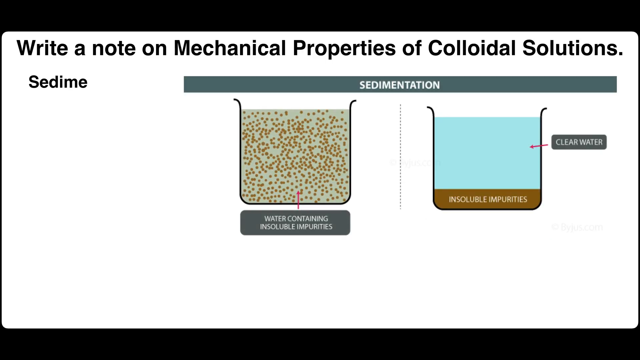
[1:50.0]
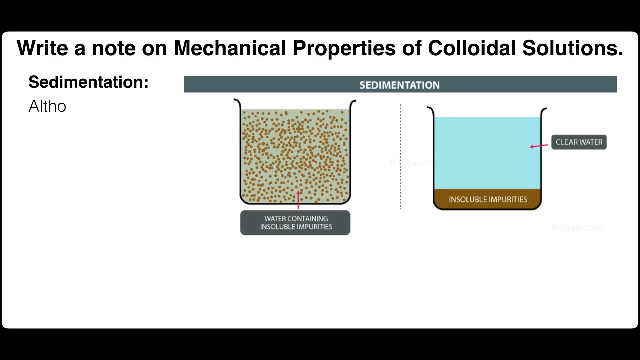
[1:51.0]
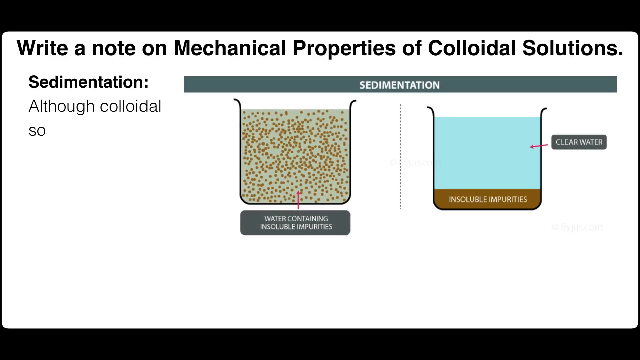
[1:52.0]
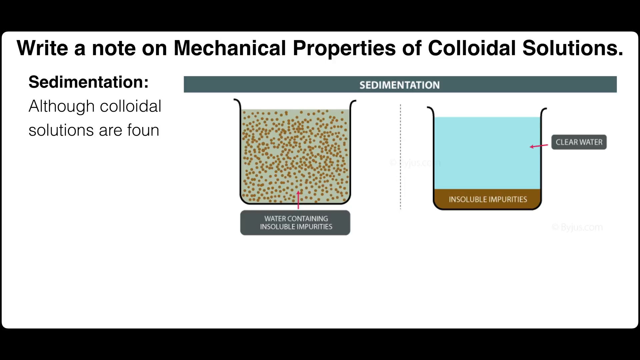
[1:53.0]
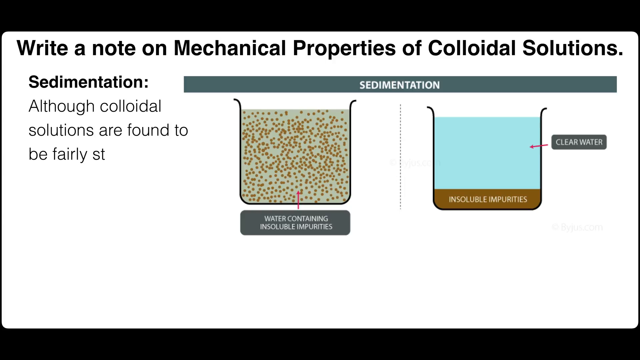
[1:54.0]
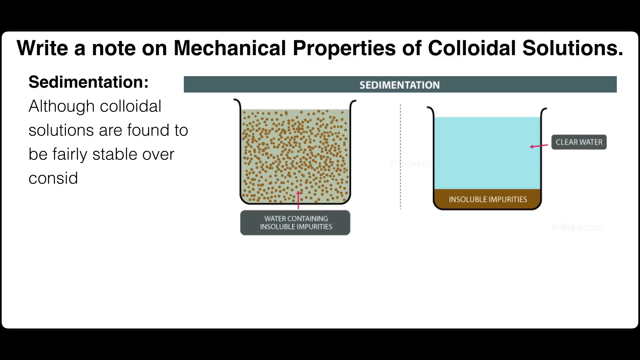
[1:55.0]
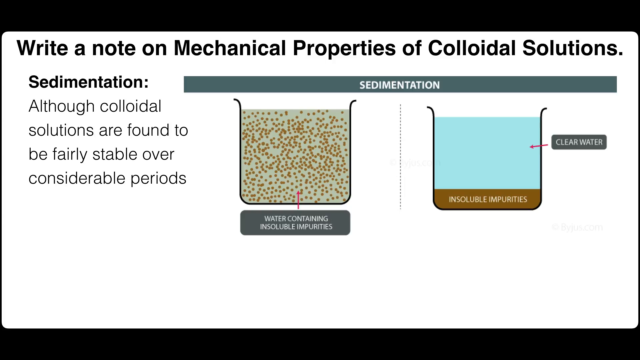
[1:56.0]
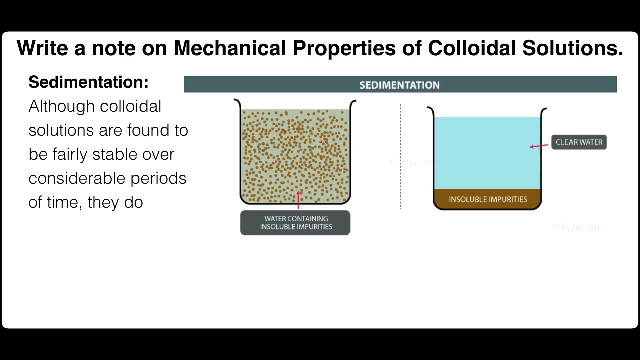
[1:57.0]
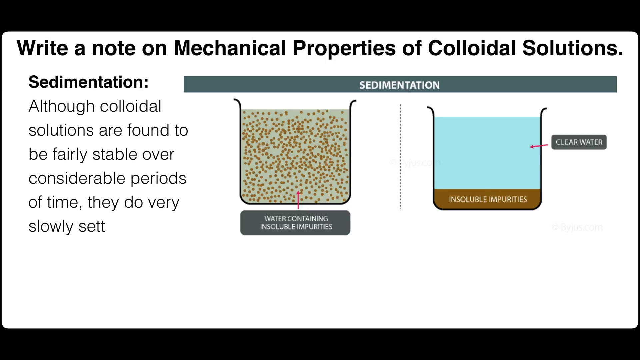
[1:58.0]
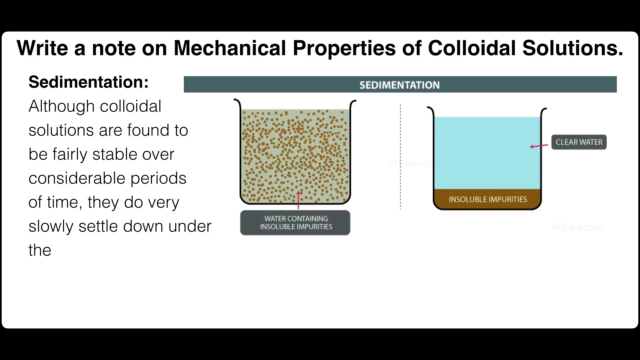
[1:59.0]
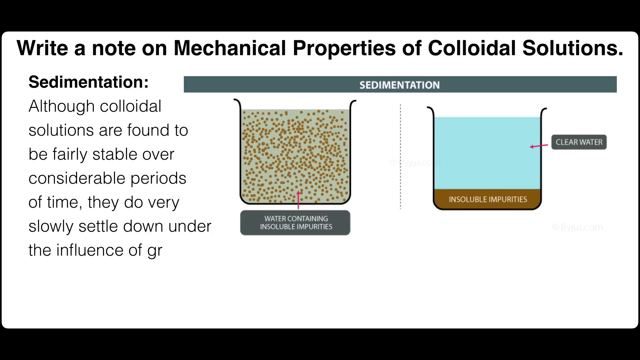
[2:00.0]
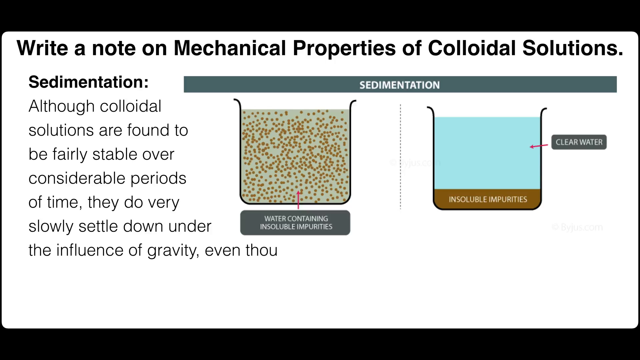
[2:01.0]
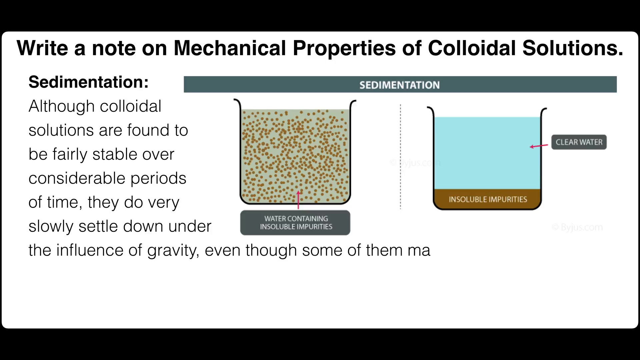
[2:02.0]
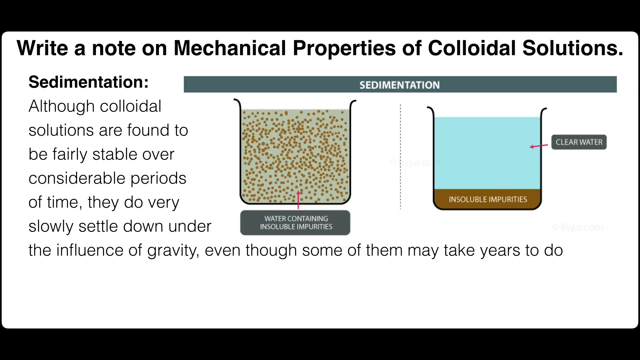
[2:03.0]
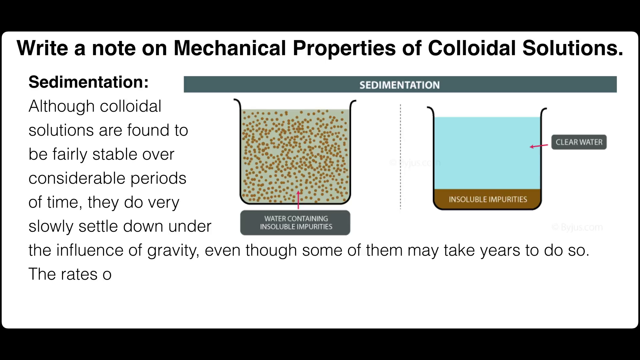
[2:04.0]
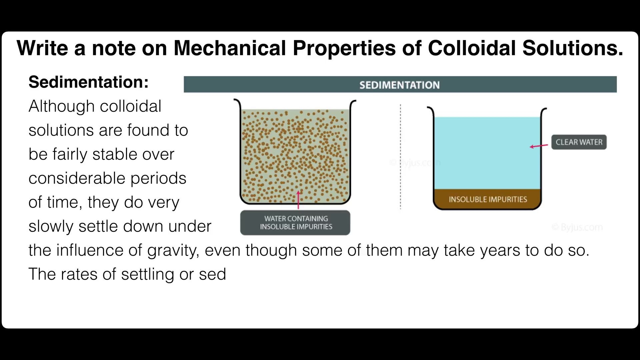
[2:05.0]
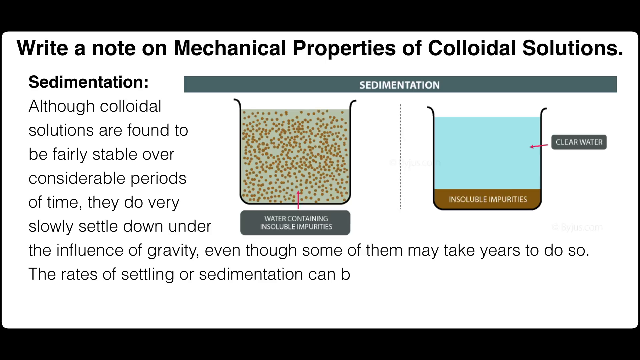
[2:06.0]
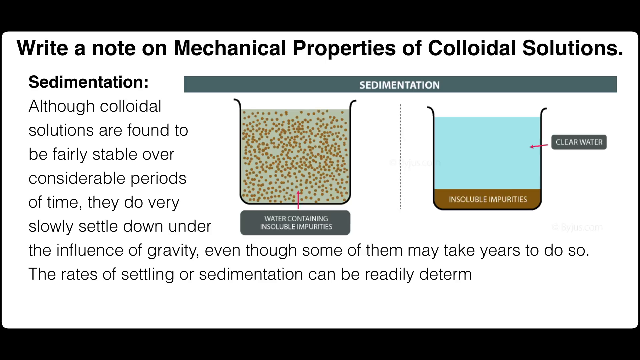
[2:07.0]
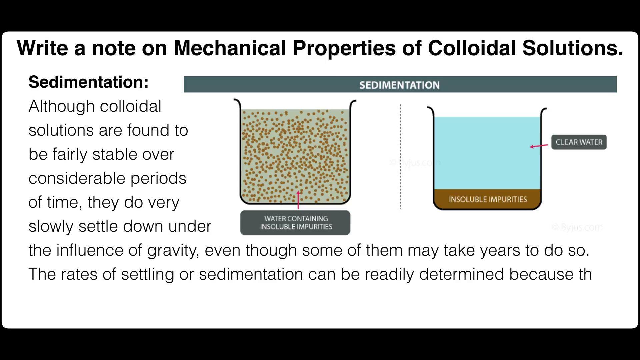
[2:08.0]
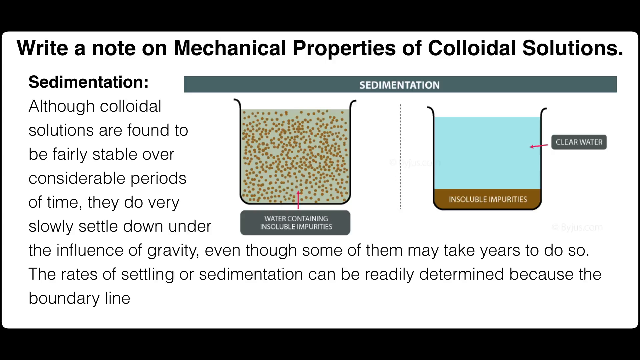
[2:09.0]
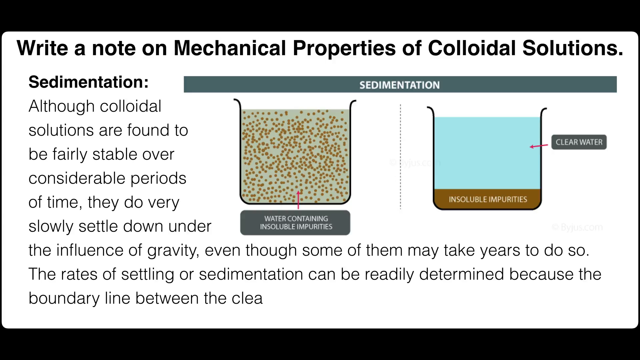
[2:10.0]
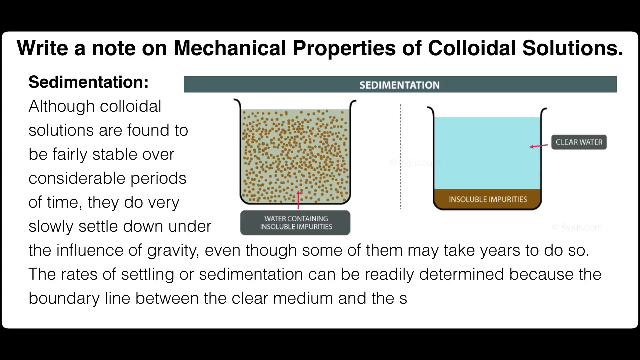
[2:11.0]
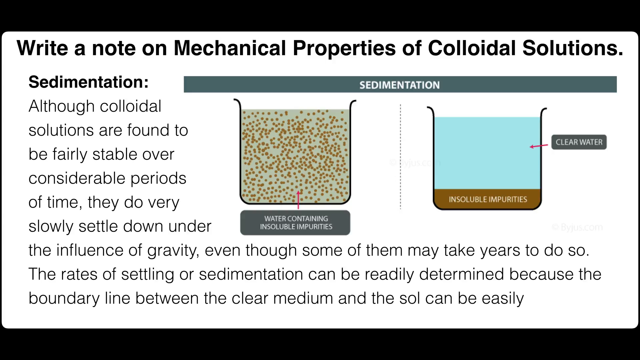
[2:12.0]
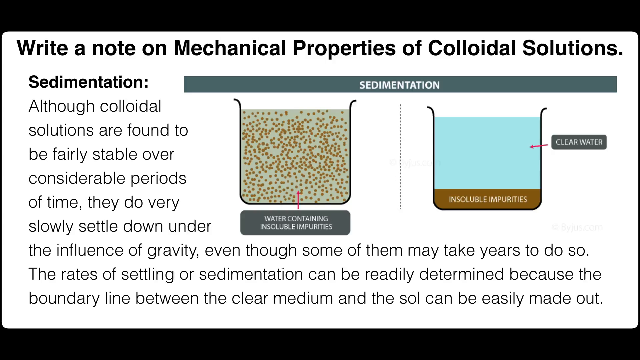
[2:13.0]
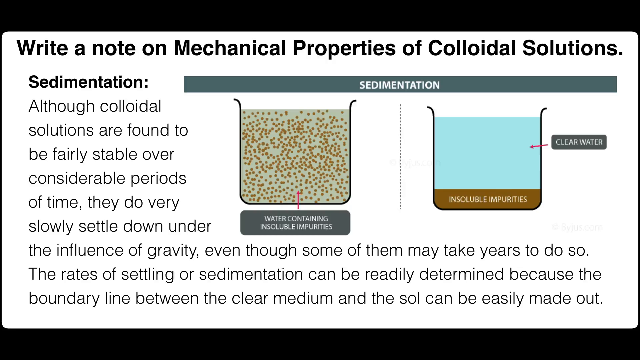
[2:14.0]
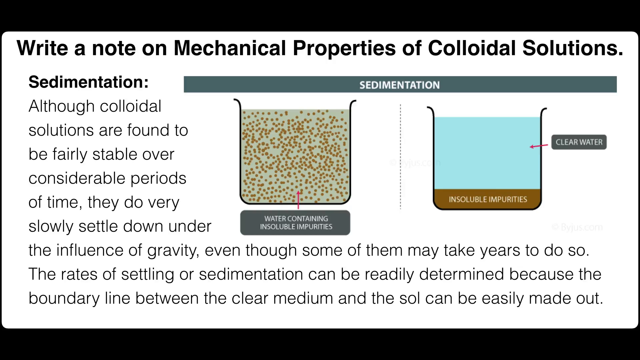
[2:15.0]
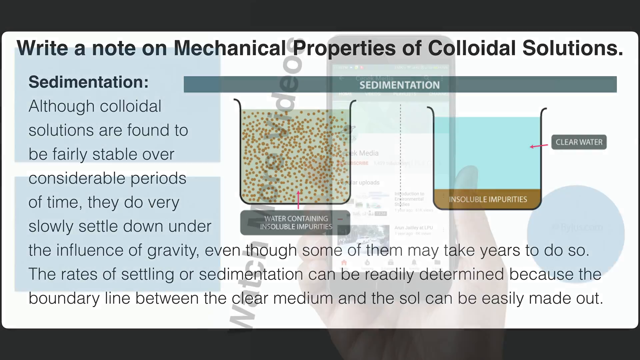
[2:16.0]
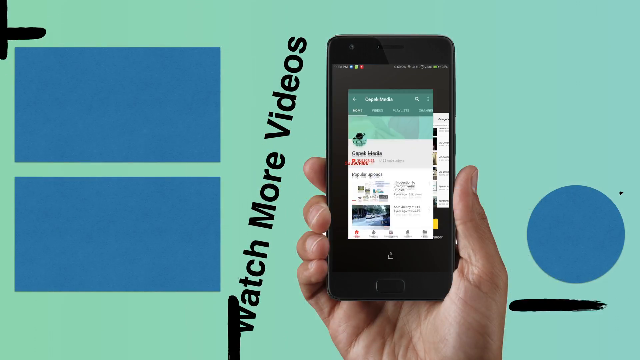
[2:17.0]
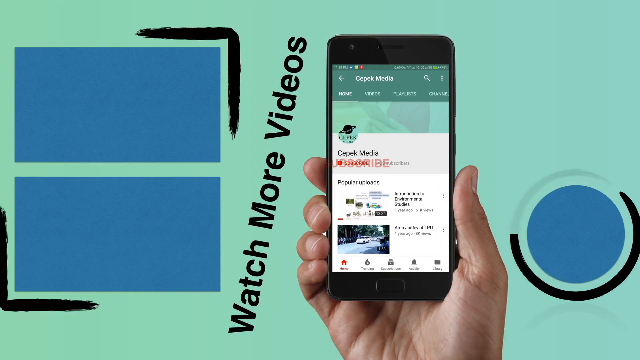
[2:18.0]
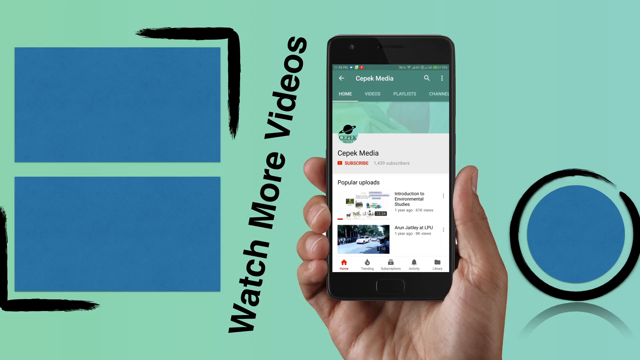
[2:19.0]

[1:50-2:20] The presentation moves to the next stage of the mechanical properties of colloidal solutions: sedimentation, the formation of sediments.